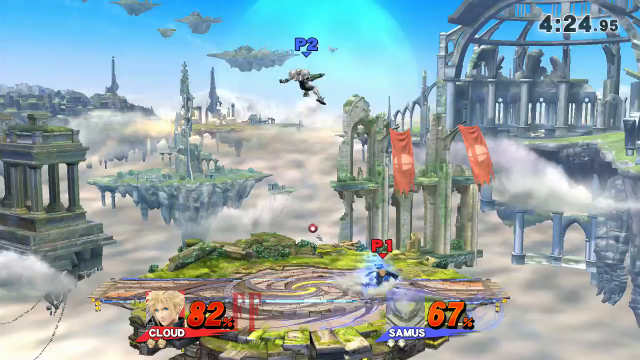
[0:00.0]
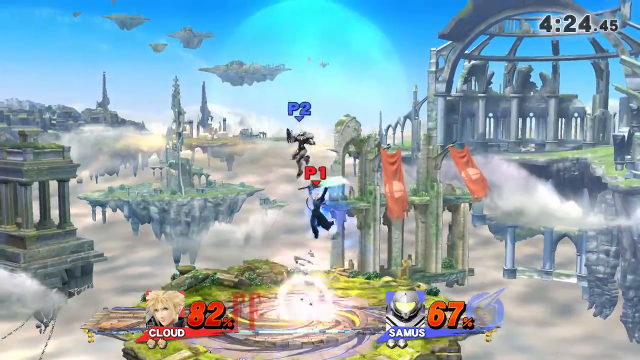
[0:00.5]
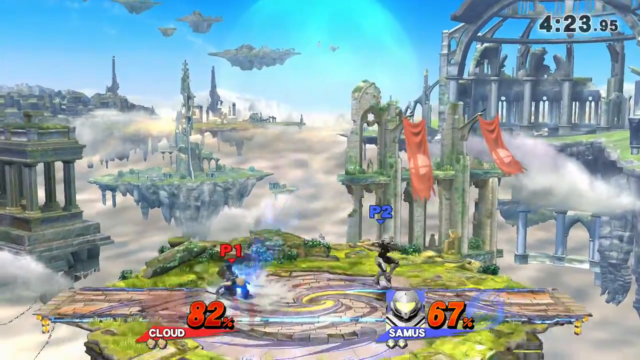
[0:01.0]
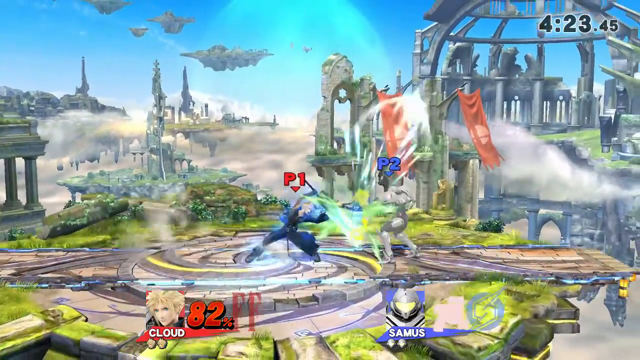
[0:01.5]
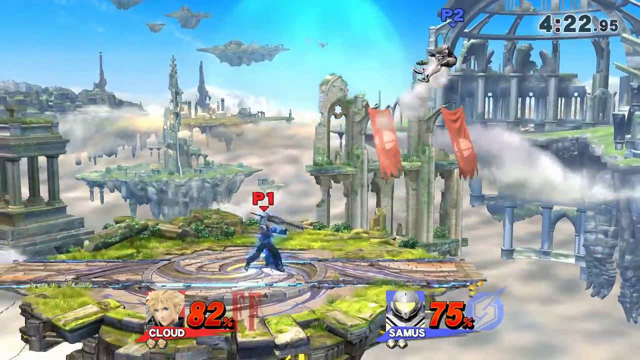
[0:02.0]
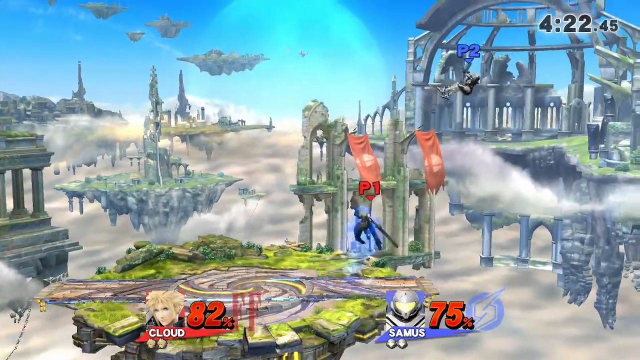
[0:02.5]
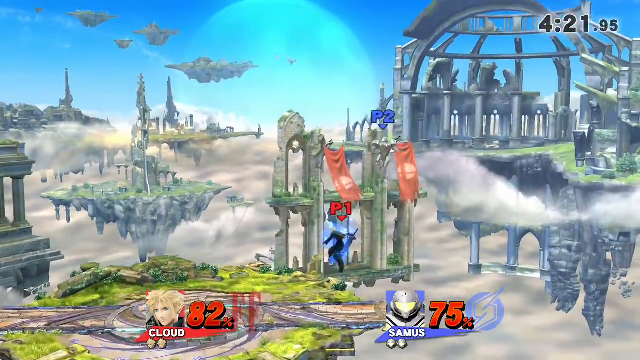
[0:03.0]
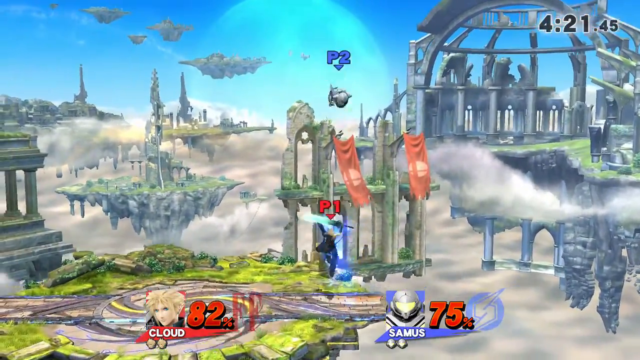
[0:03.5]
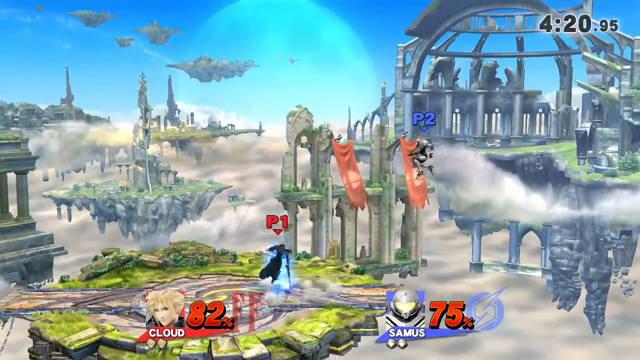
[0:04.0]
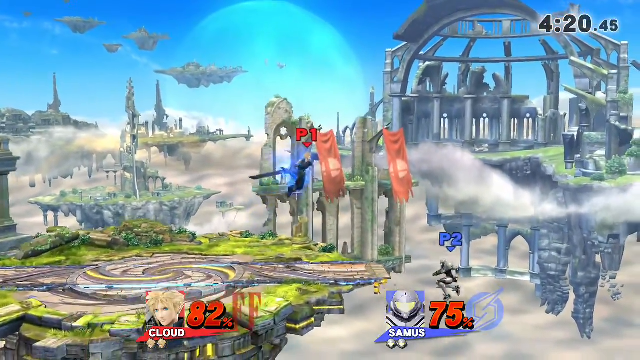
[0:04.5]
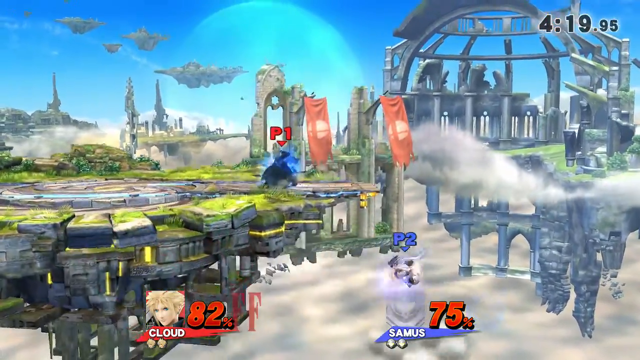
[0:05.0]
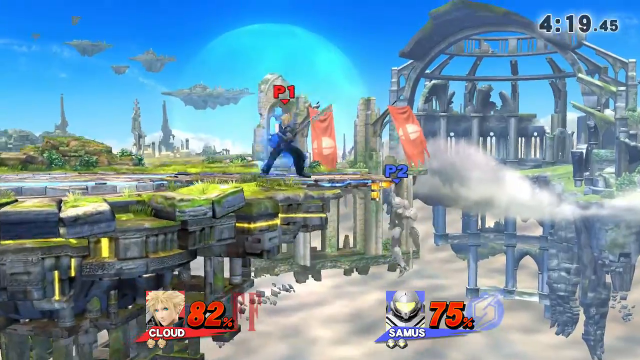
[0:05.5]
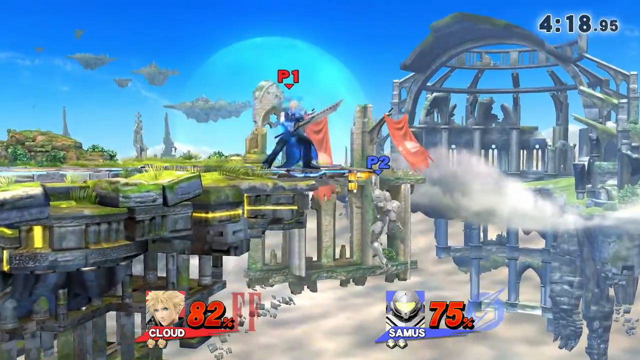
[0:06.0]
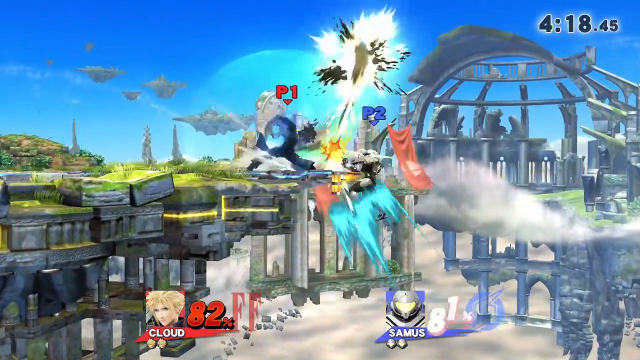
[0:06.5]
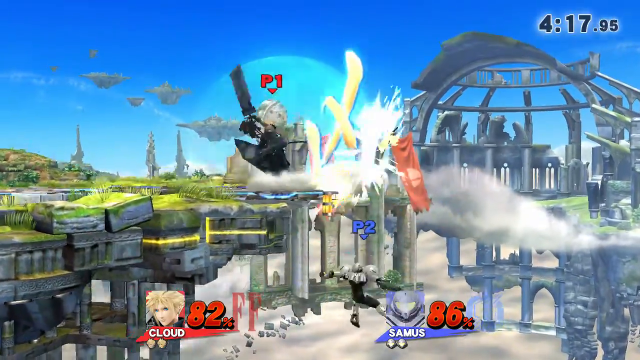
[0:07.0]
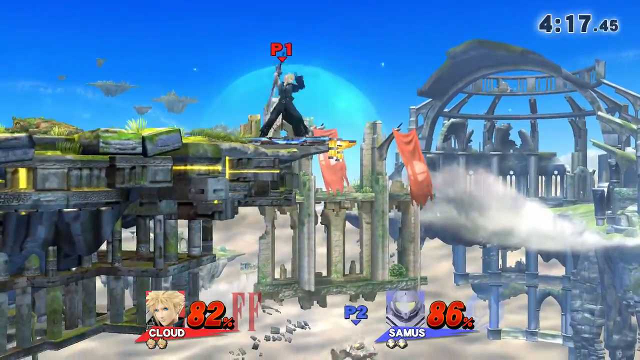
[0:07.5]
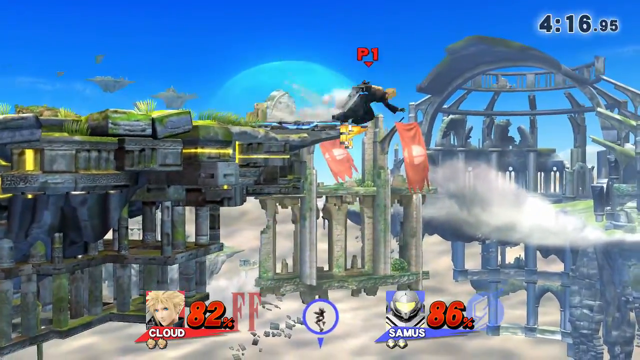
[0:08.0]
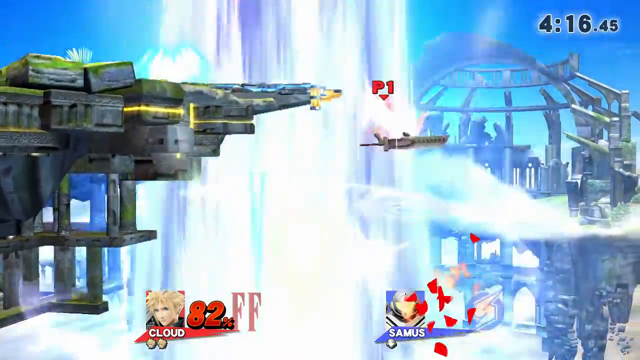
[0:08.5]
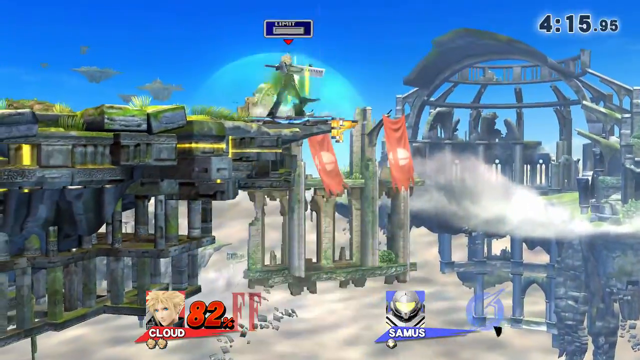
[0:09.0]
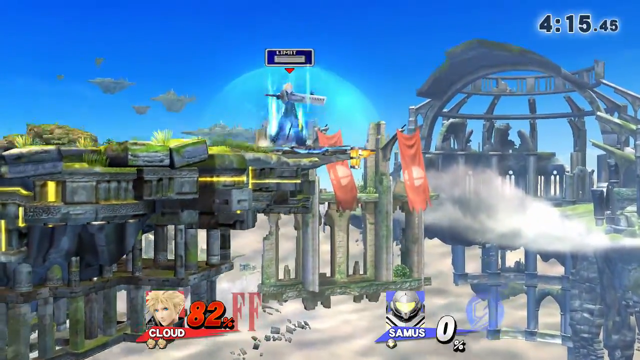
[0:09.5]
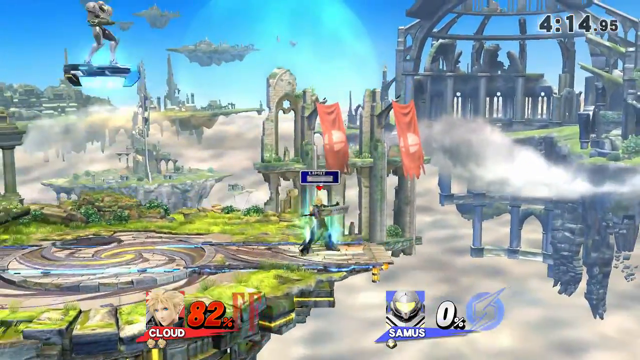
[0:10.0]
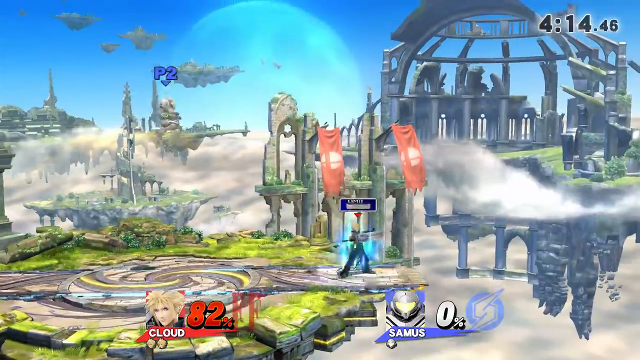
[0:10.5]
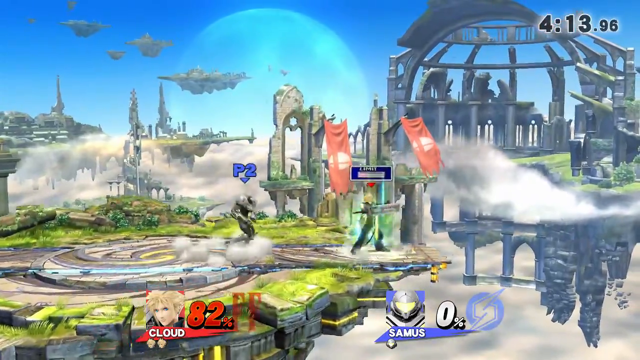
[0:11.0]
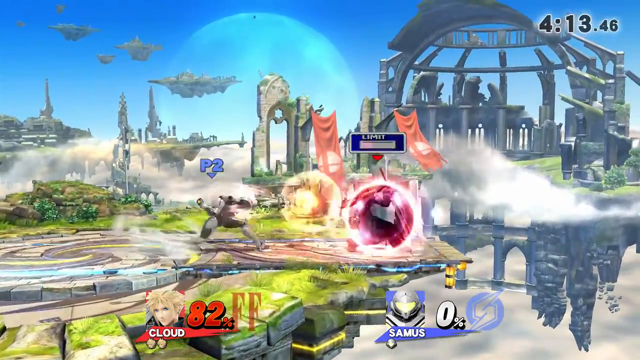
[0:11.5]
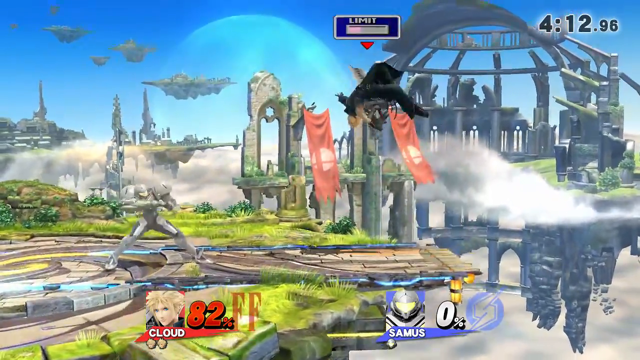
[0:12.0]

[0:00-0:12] Footage of a fighting game is shown, with the camera very distant from the action. The fight appears to take place on a small floating island, with multiple other islands in the background bearing very Greco-Roman-like ruined structures. In the distant background there appears to be a large moon in the sky, and the islands appear to be amongst the clouds. One player has a P1 icon over his head and the other has a P2 icon. They jump around and hit each other. Eventually the one with the P2 icon seems to fly off the right side of the platform, but he grabs onto the ledge. As he tries to pull himself up, the one with the P1 icon slashes at him with a sword, and he falls off the edge. The P1 player jumps off the ledge briefly but recovers and goes back on. The P2 player respawns and appears above the arena on some sort of hoverboard, then jumps down while the P1 player is still next to the ledge.